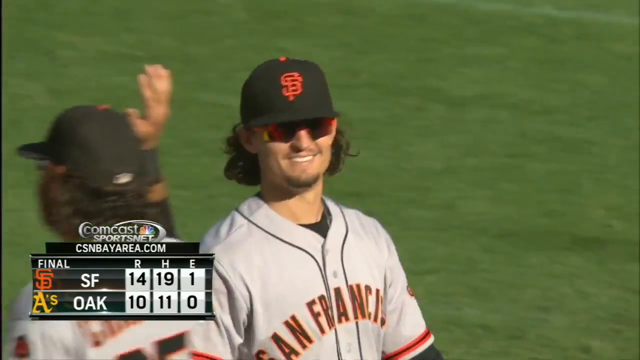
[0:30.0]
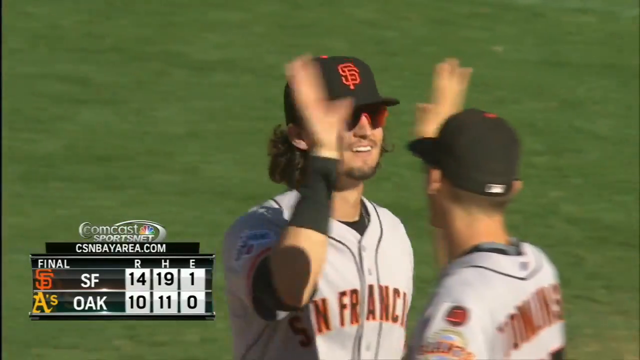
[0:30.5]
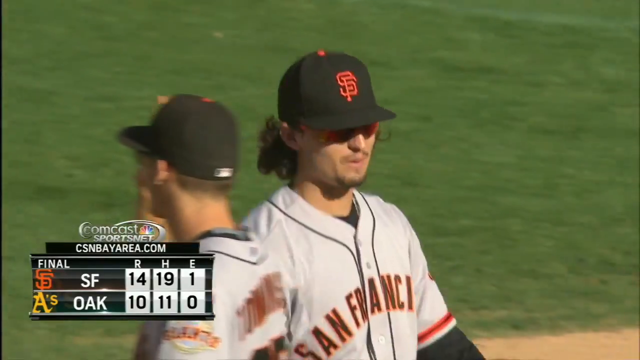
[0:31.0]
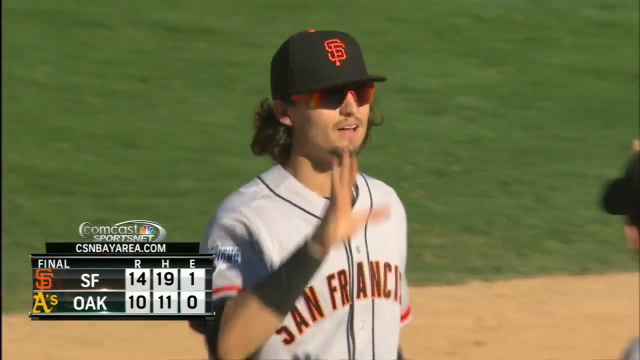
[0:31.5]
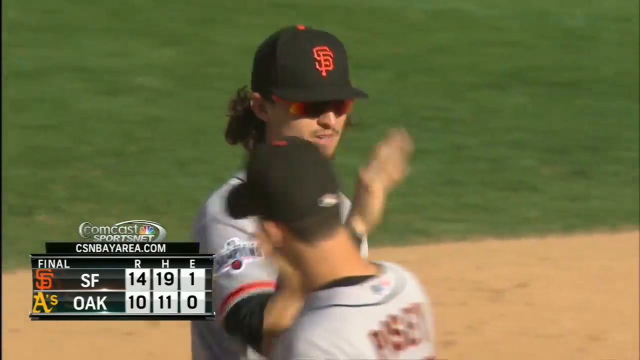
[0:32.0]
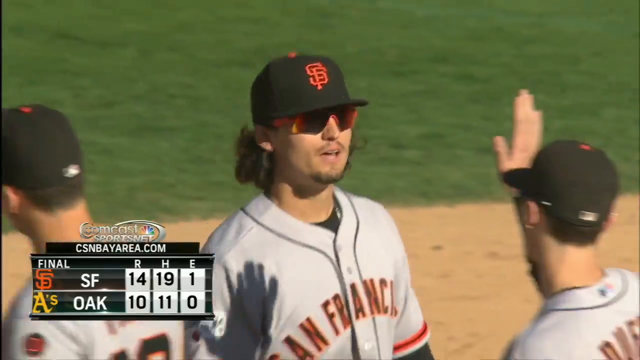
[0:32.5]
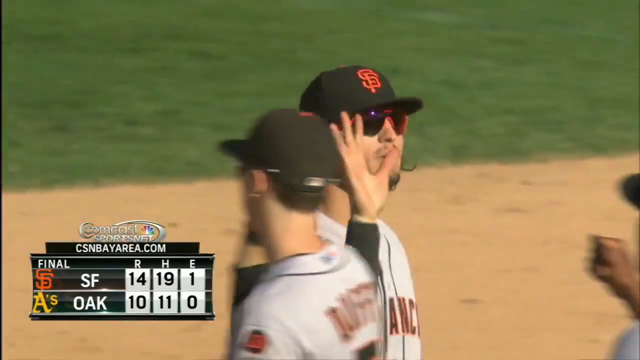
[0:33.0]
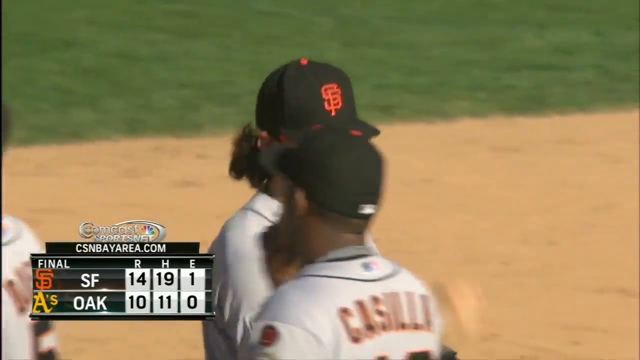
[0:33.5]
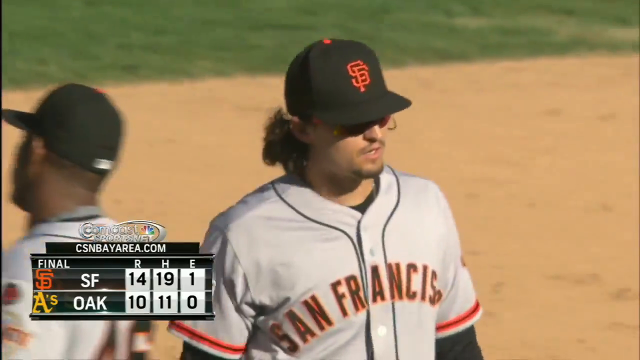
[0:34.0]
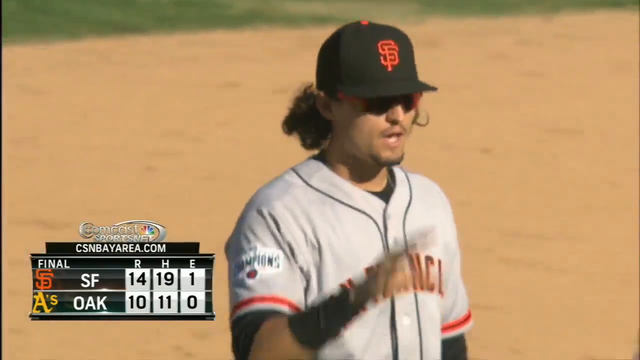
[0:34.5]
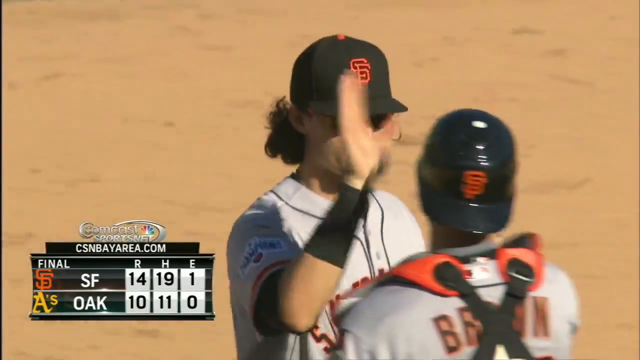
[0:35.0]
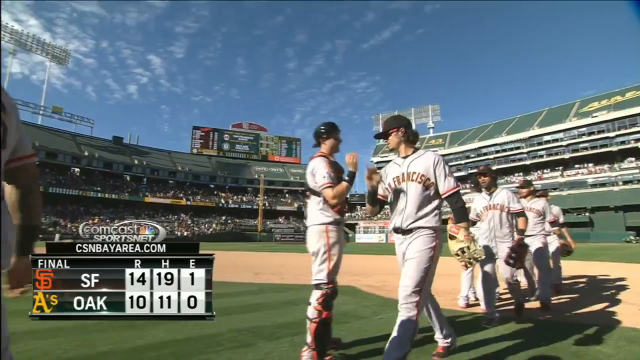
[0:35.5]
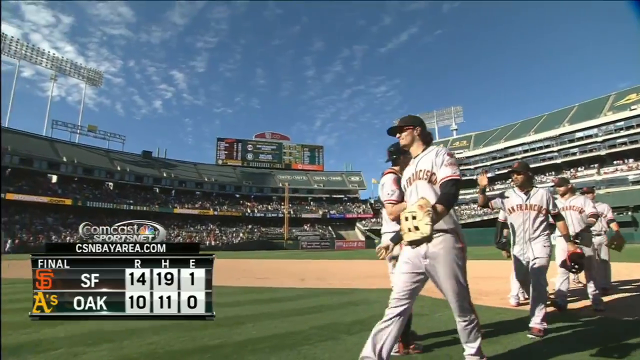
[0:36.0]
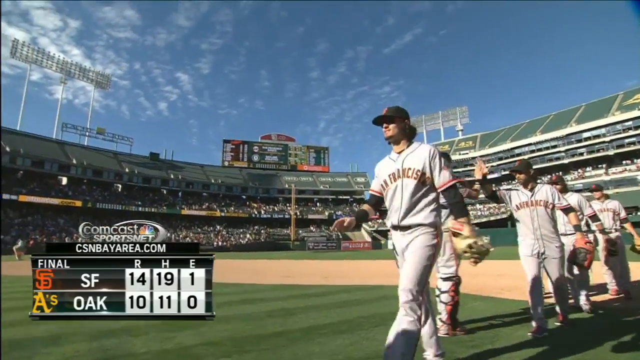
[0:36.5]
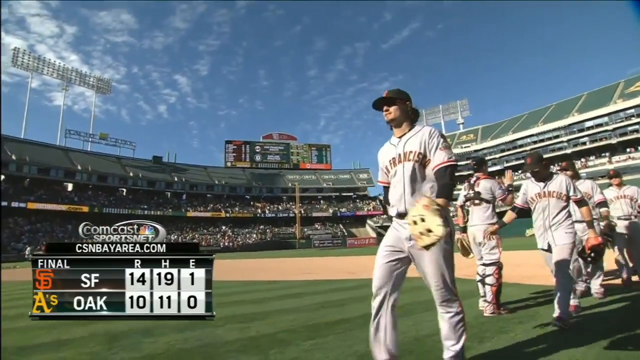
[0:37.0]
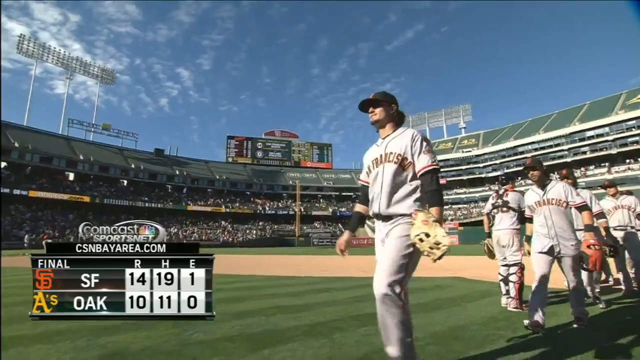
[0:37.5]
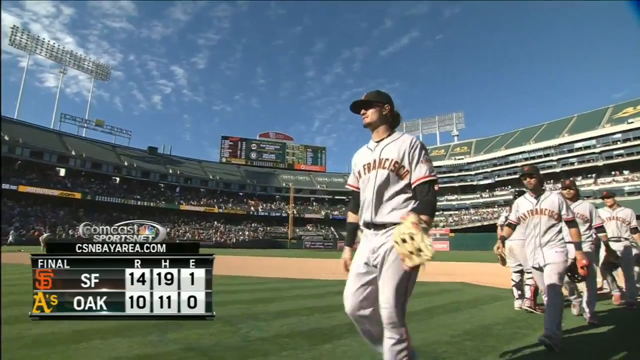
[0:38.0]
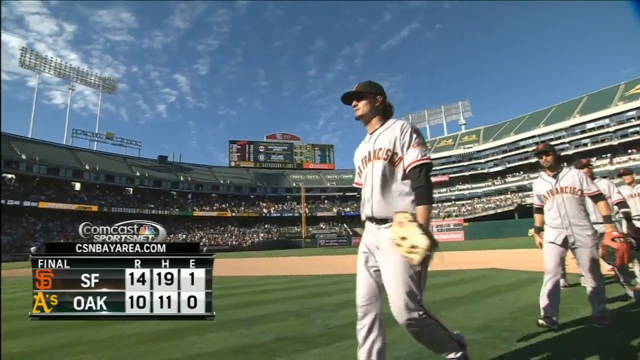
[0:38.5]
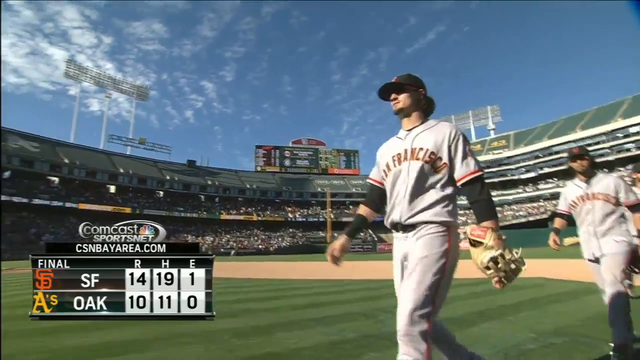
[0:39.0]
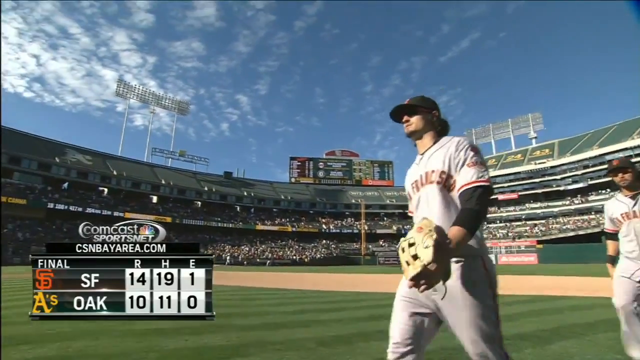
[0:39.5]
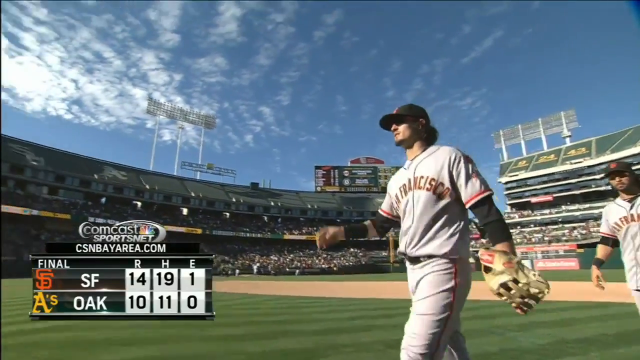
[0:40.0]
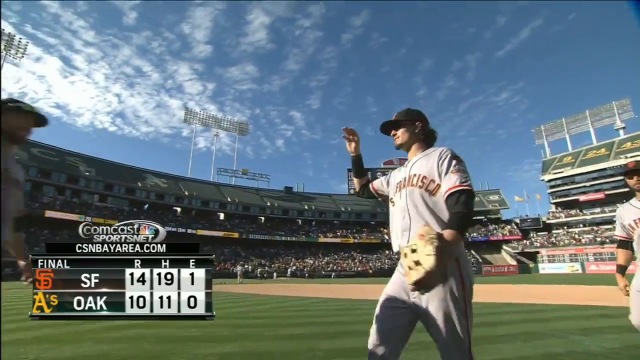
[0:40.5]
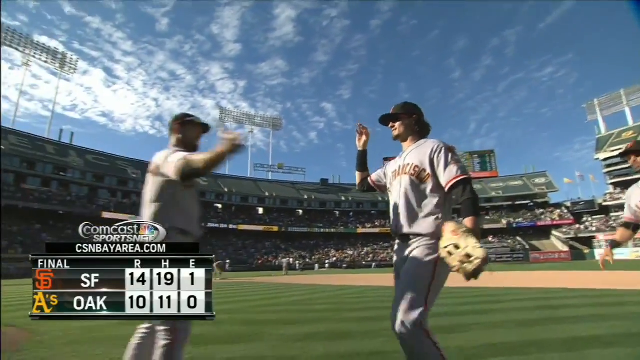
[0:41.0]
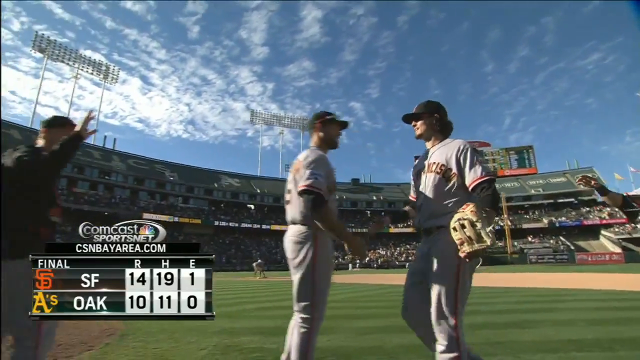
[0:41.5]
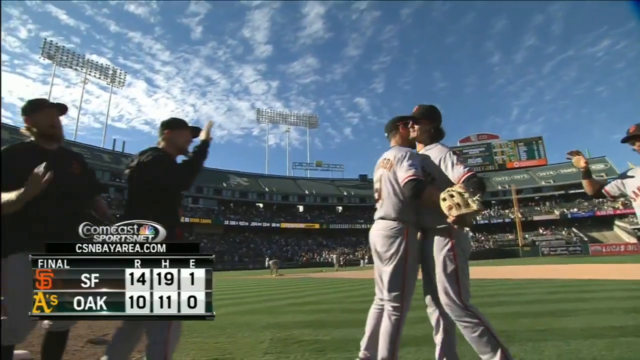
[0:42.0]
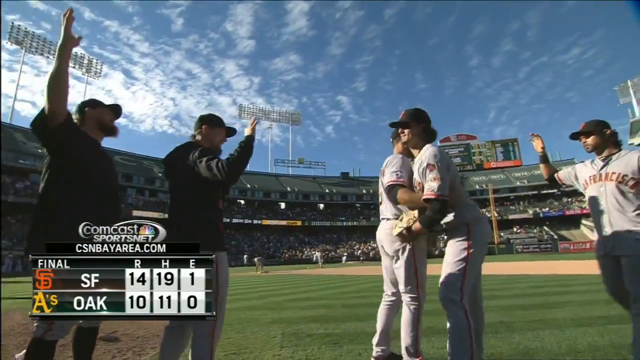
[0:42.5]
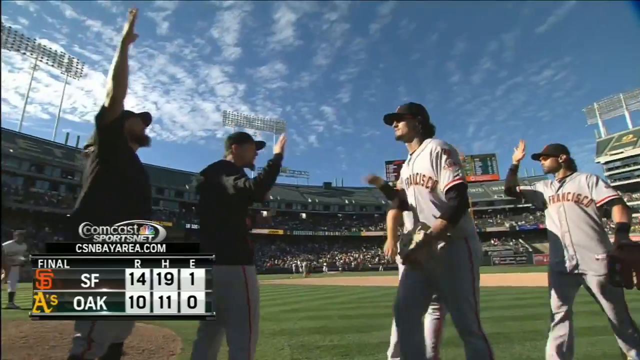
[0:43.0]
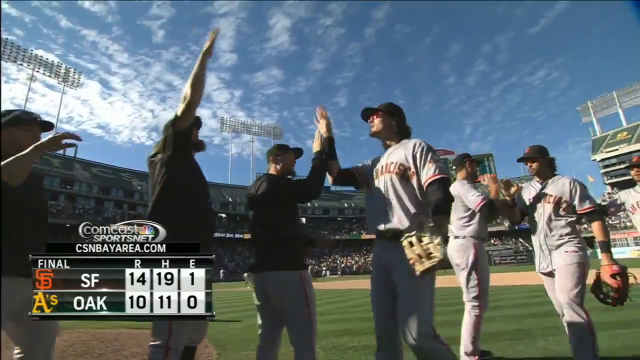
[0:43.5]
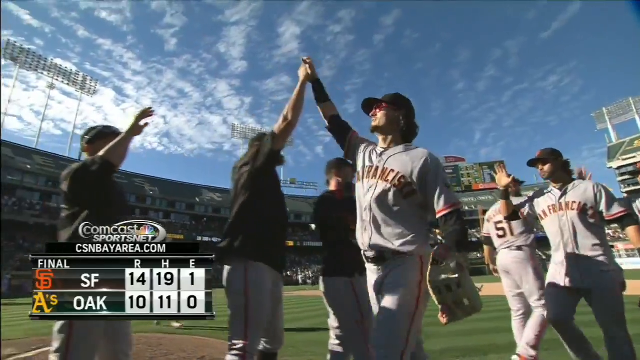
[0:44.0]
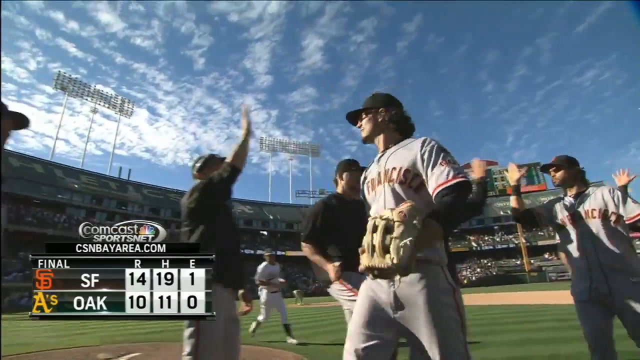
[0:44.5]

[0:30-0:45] After the San Francisco versus Oakland game, which San Francisco won, the teams line up in a single-file line along the foul line and give each other high fives, with San Francisco walking one way and Oakland walking the other, each giving everybody a high five.